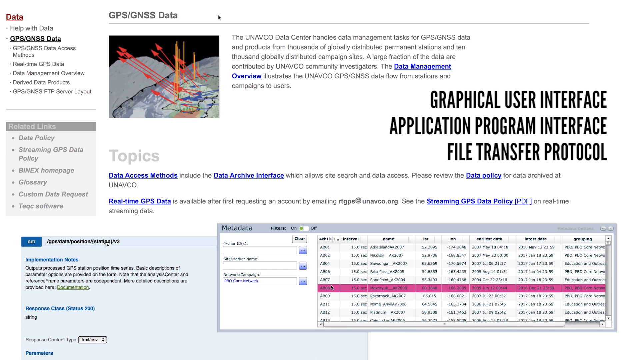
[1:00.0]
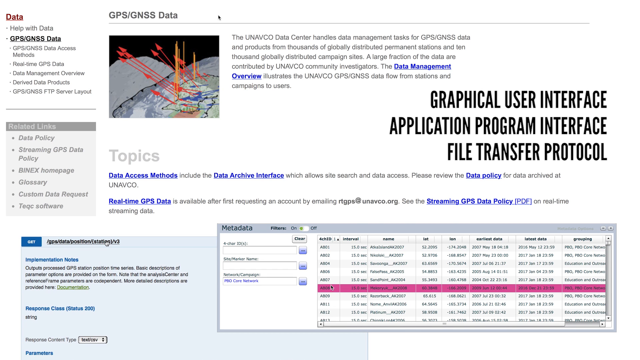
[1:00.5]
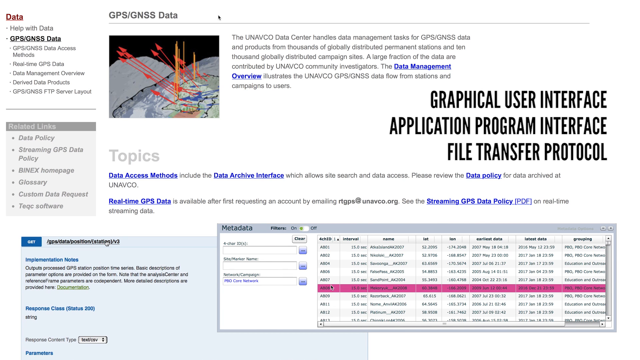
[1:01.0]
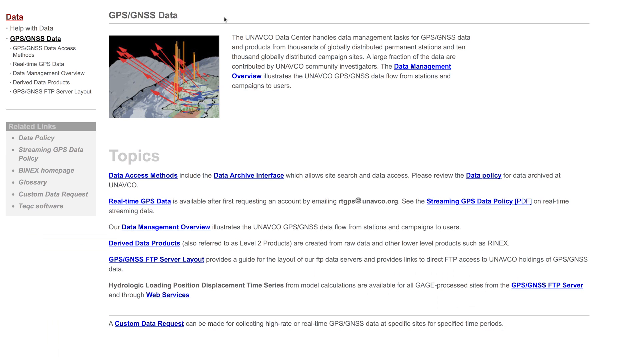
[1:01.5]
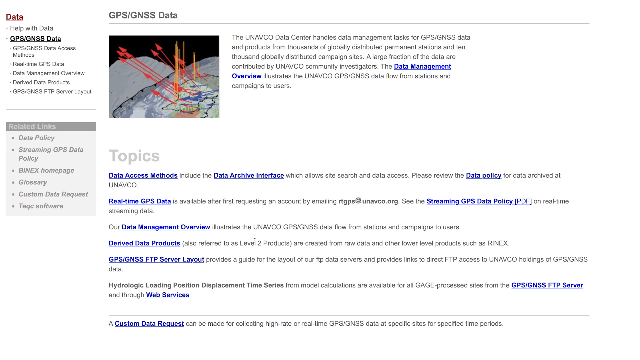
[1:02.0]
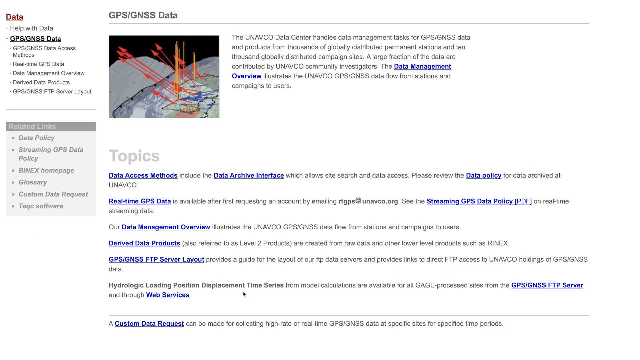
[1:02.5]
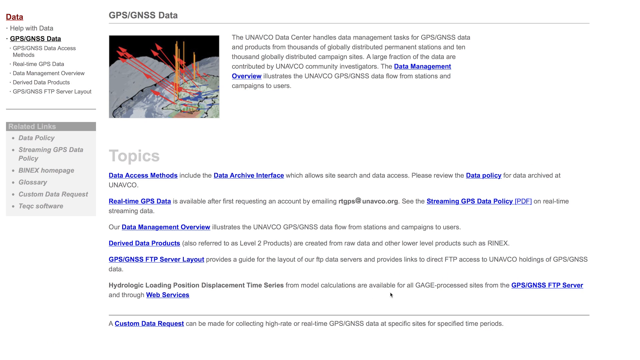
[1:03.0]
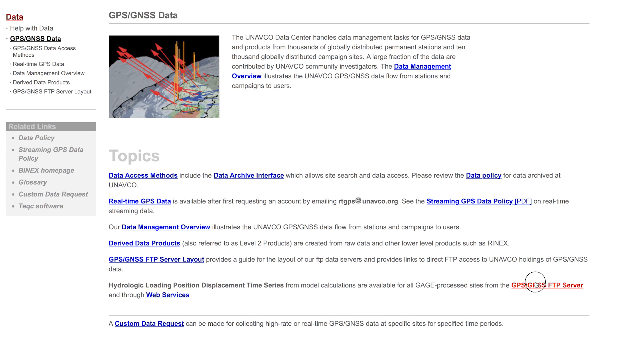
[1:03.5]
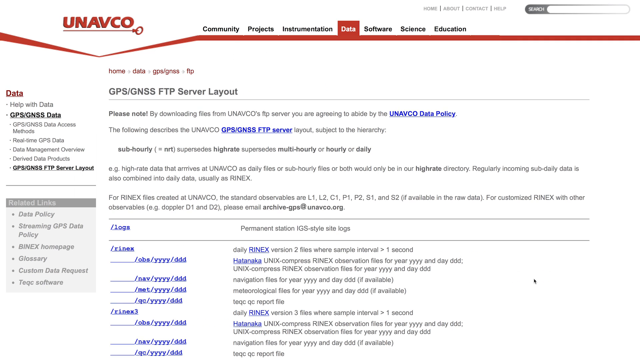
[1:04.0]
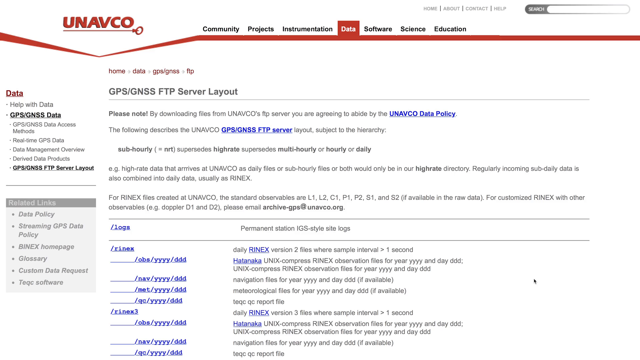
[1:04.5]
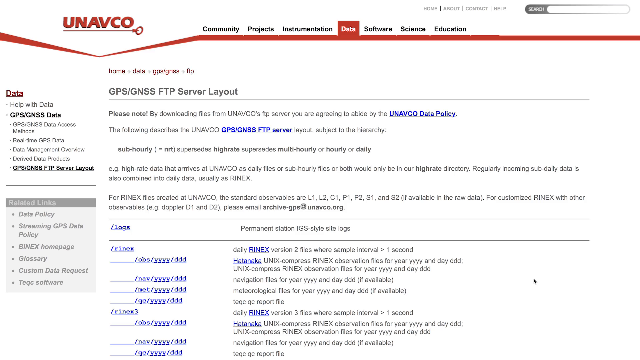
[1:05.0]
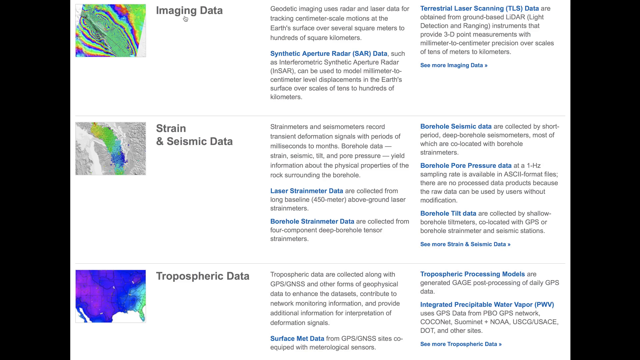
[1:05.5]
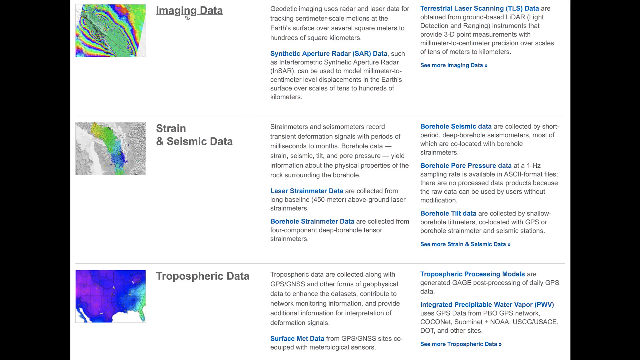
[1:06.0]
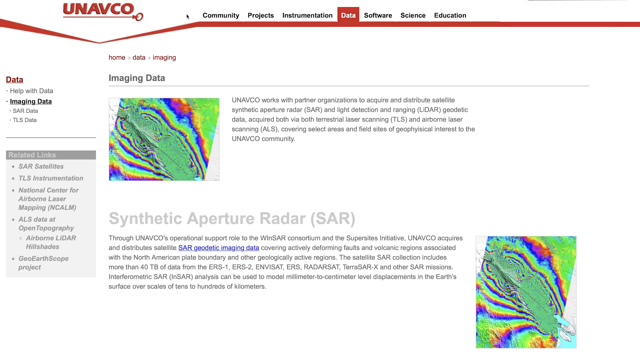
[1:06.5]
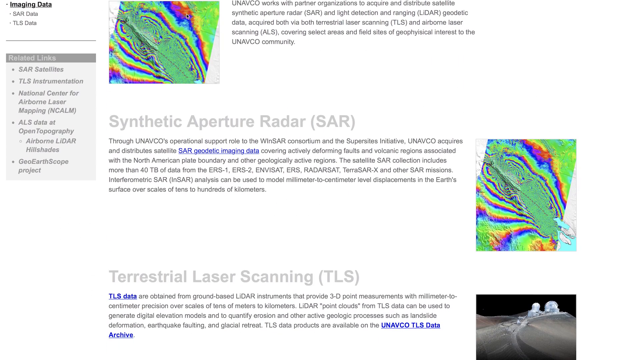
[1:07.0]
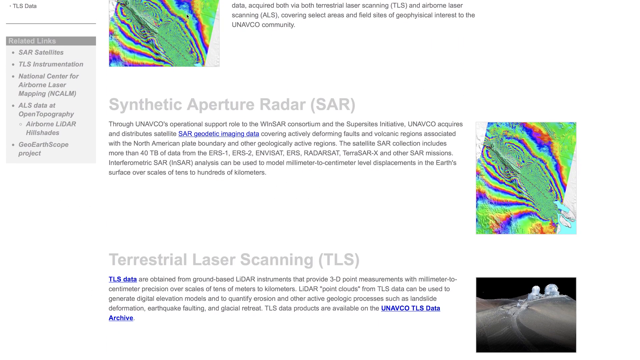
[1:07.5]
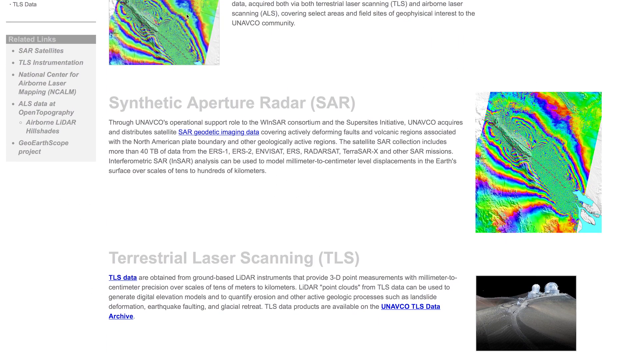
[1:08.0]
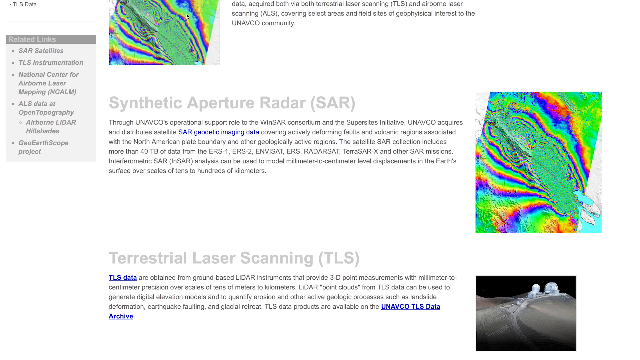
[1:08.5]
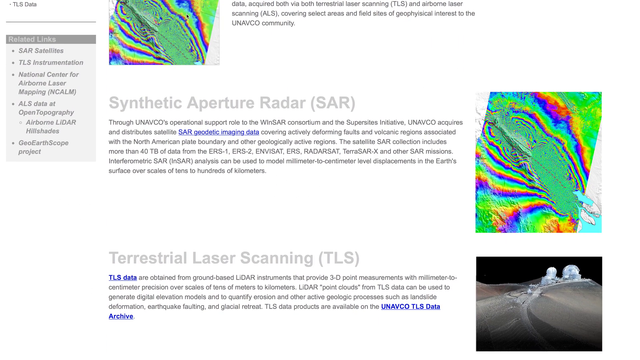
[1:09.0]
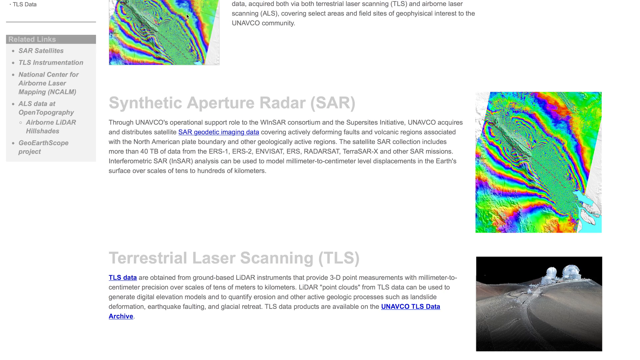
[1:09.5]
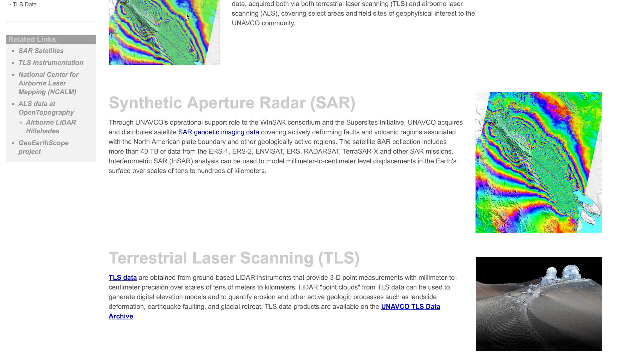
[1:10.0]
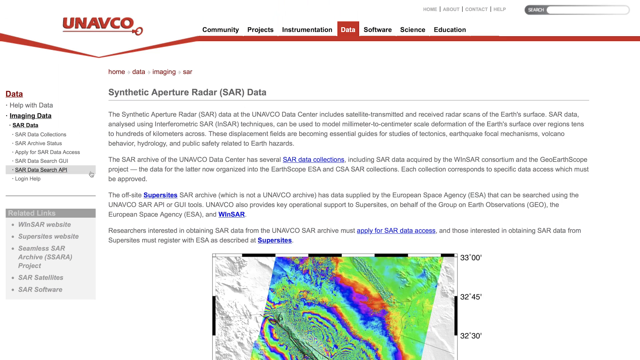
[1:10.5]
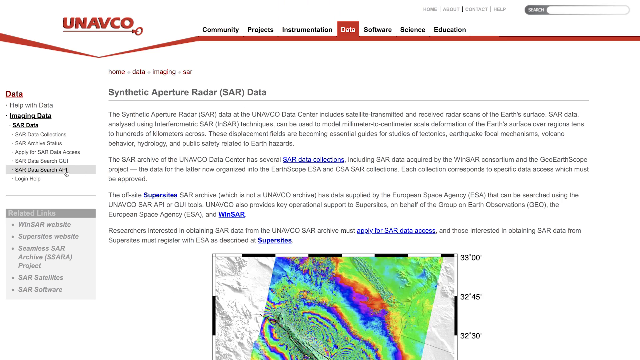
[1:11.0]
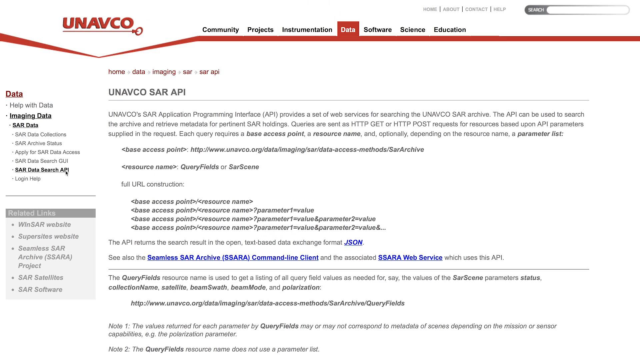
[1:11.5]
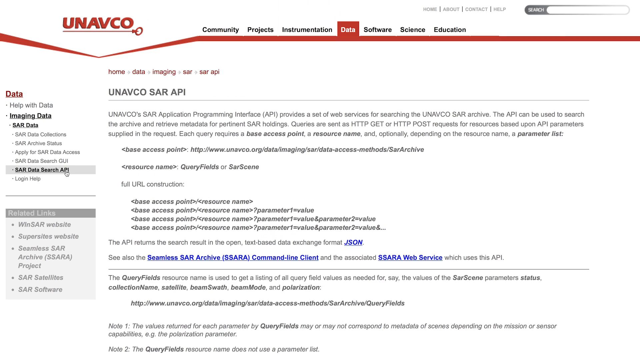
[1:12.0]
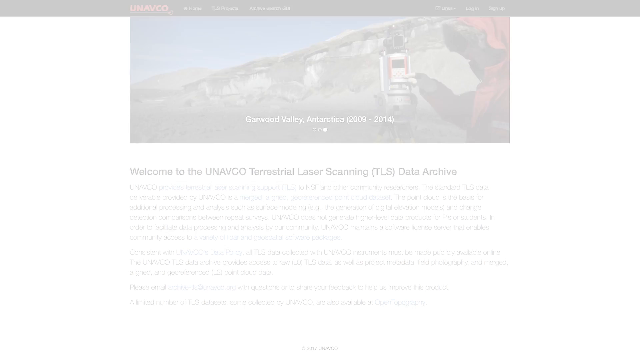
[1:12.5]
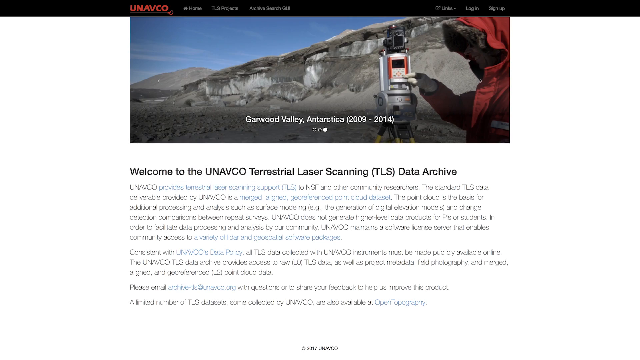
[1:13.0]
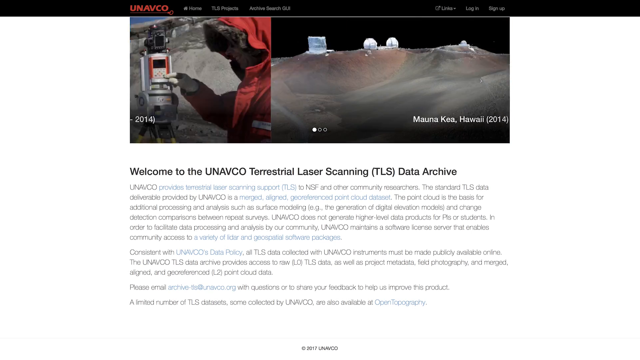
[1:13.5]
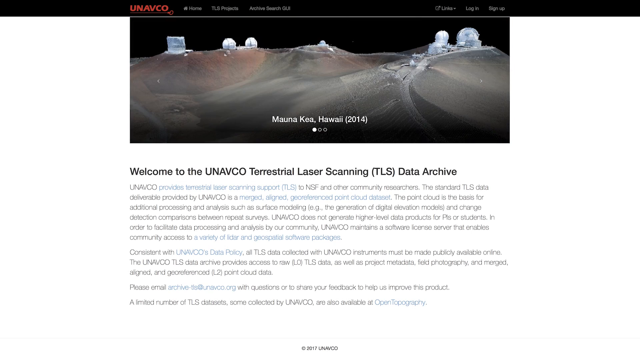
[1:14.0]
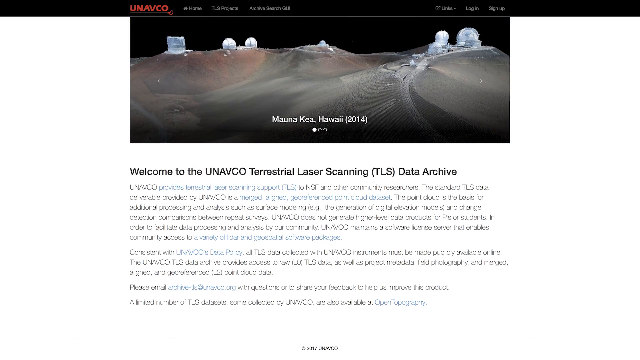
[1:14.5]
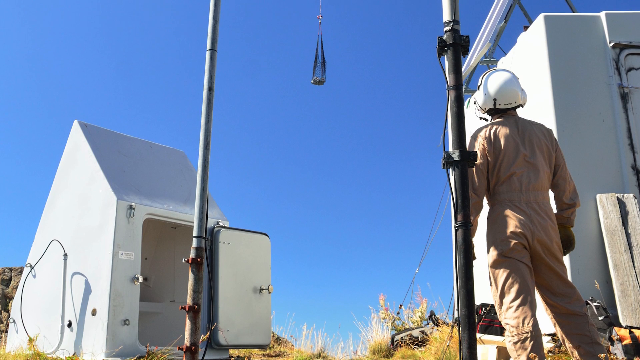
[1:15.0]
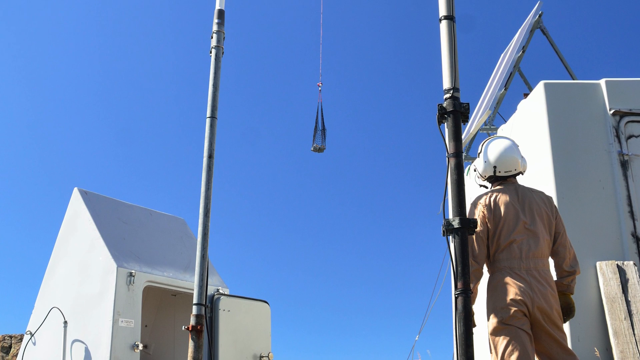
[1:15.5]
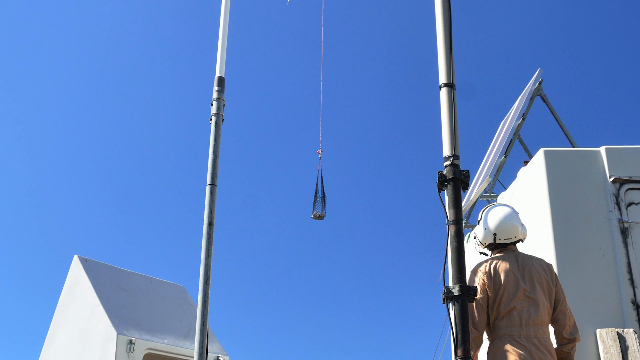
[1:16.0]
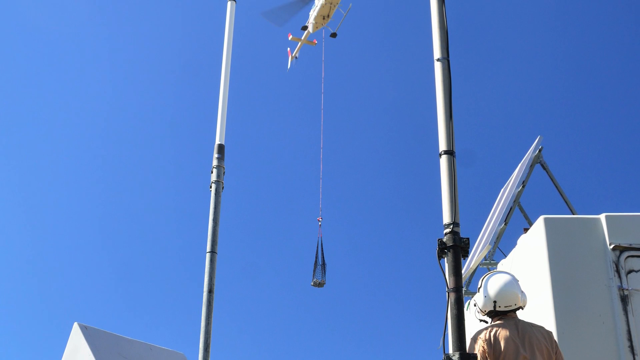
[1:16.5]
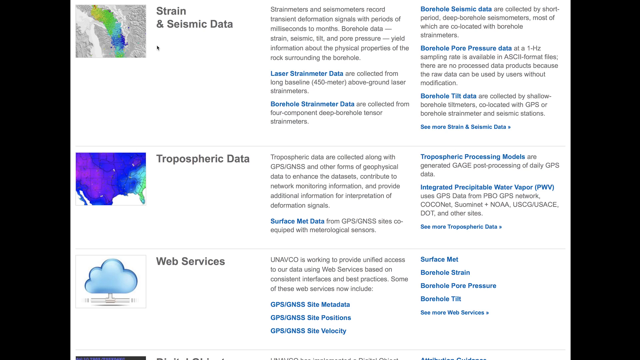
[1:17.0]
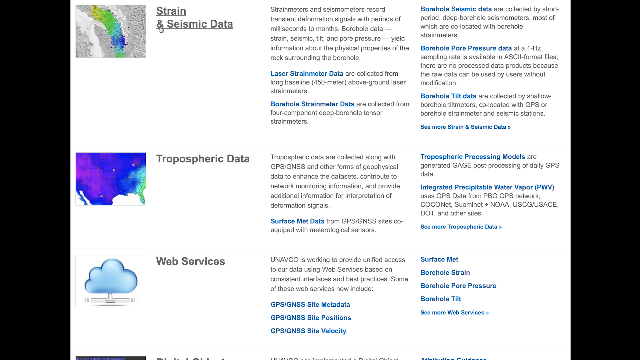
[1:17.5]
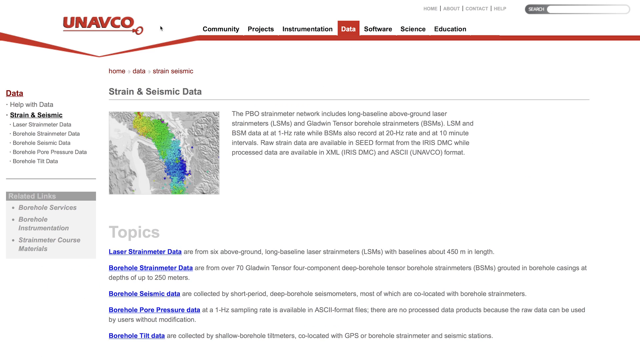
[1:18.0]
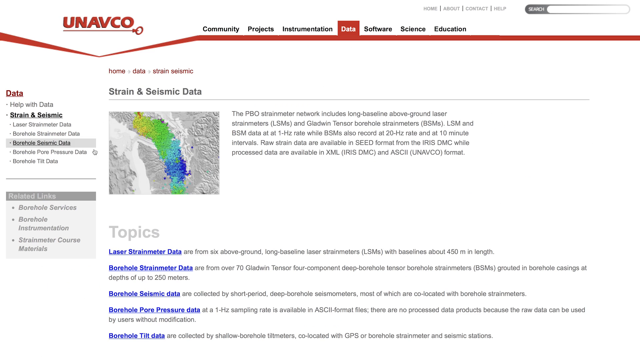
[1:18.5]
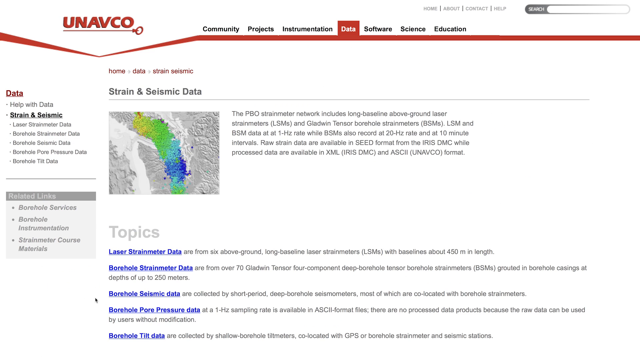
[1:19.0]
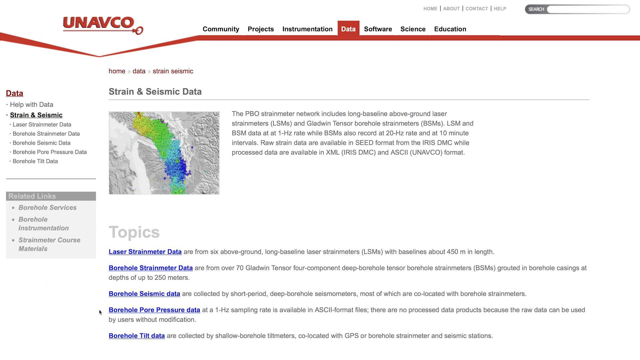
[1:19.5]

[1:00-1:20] The UNIVACO website shows a GPS/GNSS data section reading "the UNIVACO Center handles data management tasks for GPS, GNSS data products from thousands of globally distributed permanent stations and thousands of globally distributed campaign sites. A large fraction of the data are contributed by UNIVACO community investigators. The data management overview illustrates the UNIVACO GPS, GNSS data data flow from stations and campaigns to users." Below appear "graphical user interface", "application program interface" and "file transfer protocol".